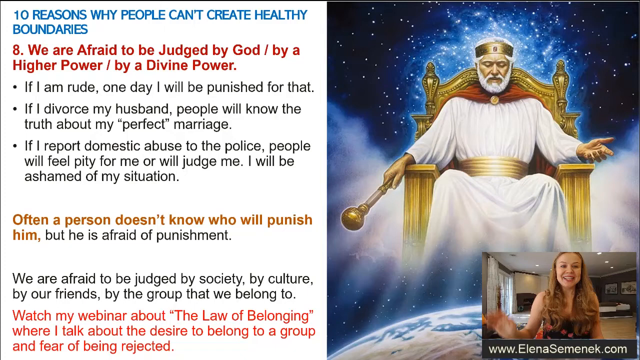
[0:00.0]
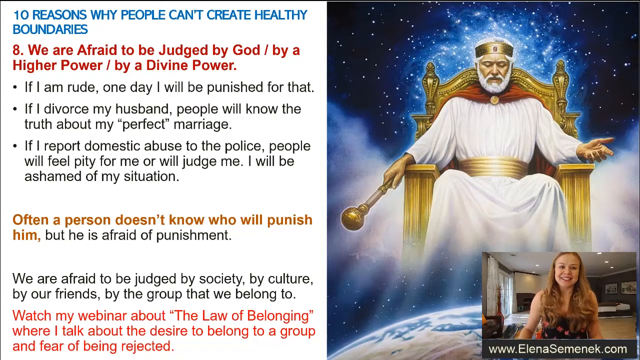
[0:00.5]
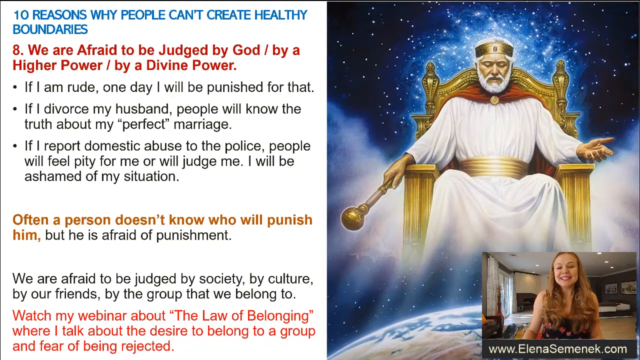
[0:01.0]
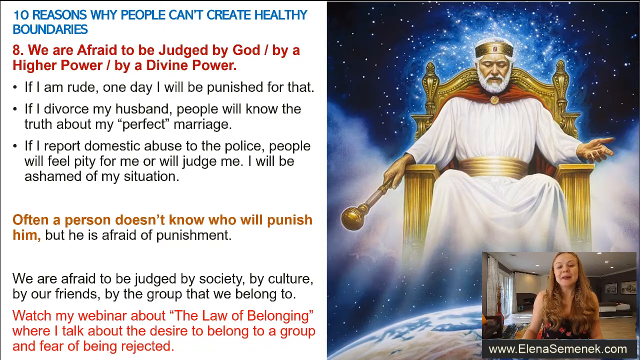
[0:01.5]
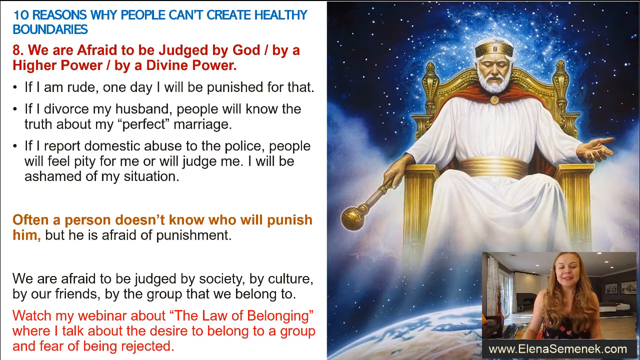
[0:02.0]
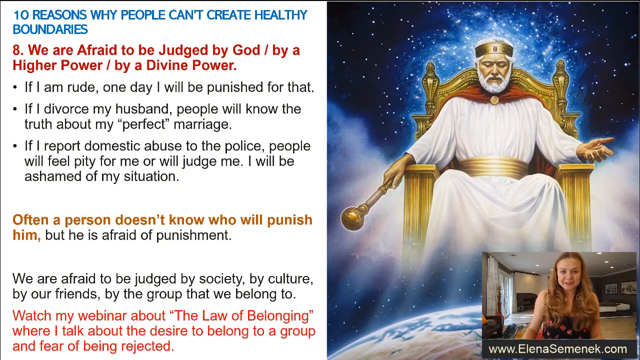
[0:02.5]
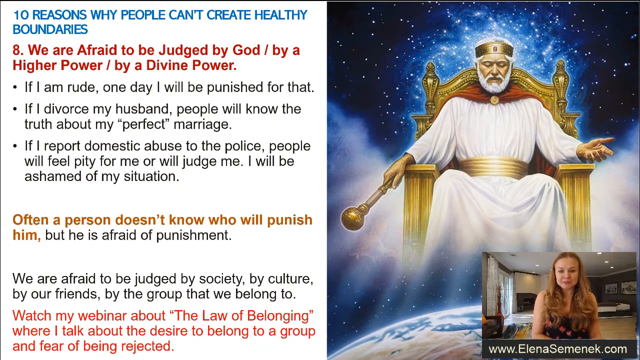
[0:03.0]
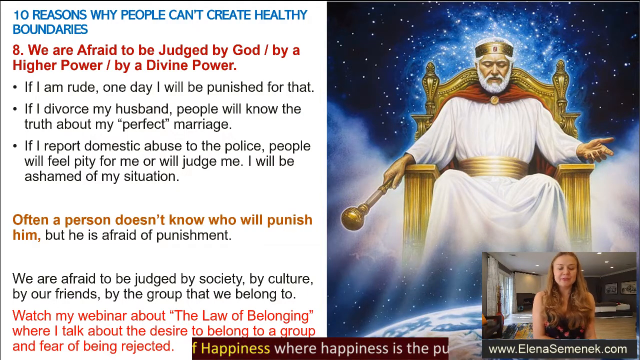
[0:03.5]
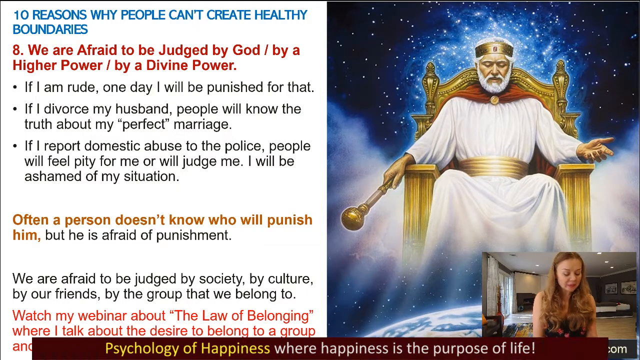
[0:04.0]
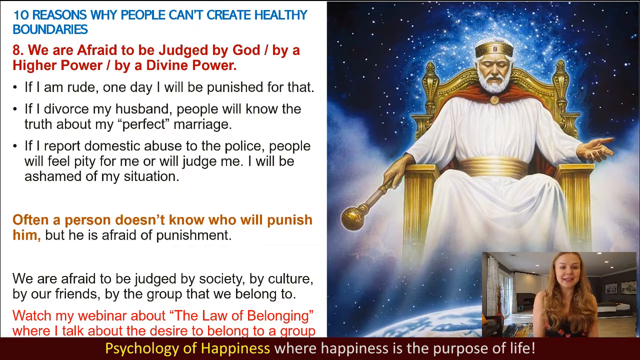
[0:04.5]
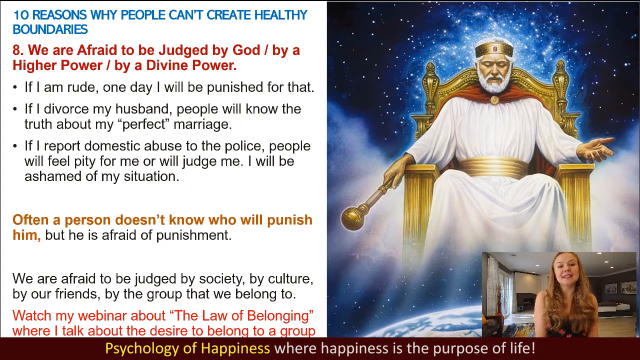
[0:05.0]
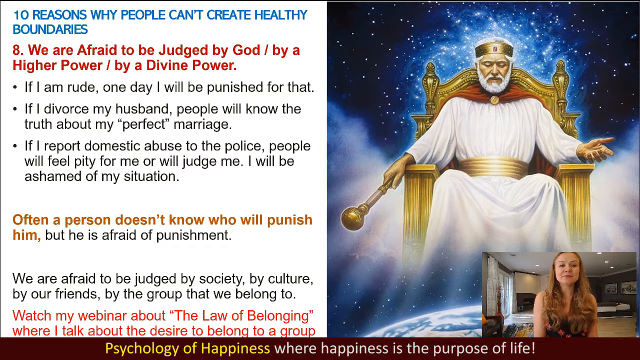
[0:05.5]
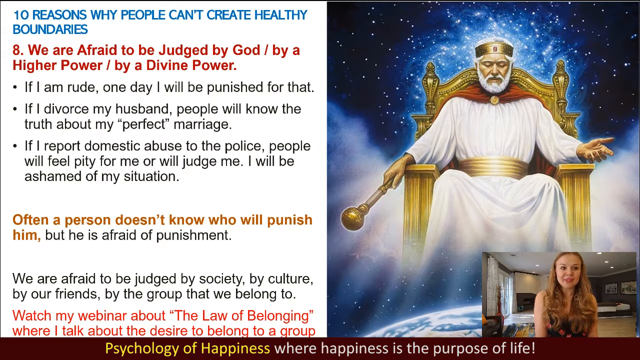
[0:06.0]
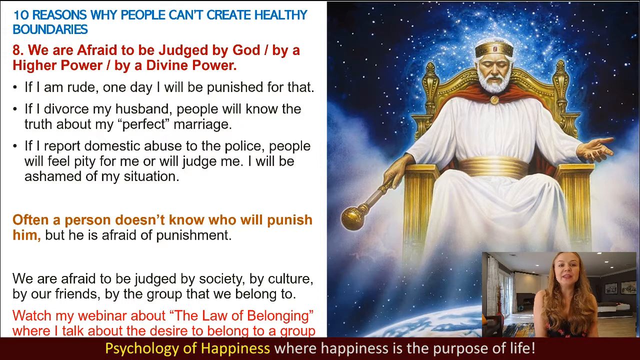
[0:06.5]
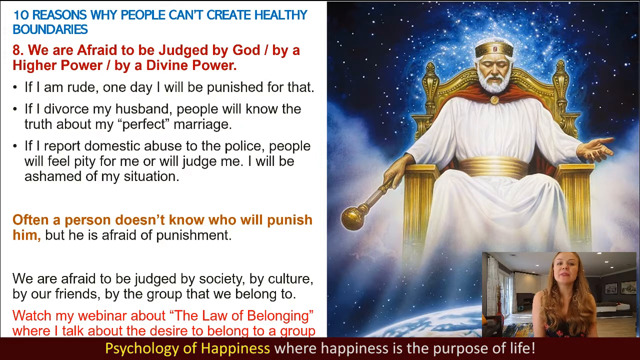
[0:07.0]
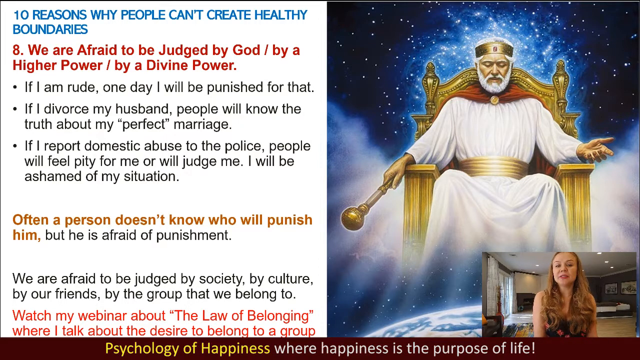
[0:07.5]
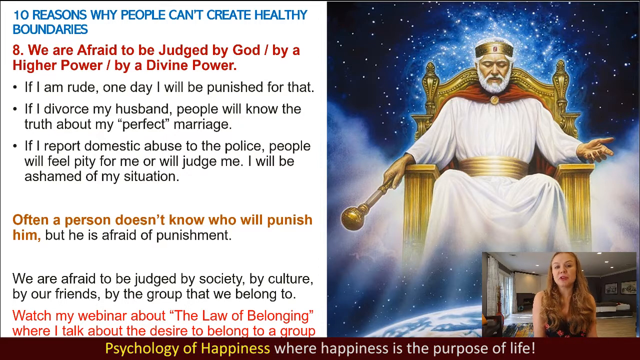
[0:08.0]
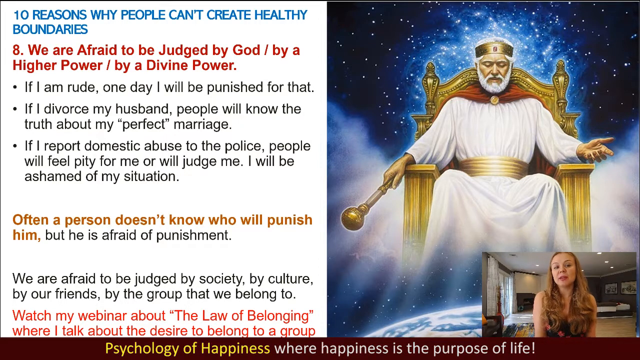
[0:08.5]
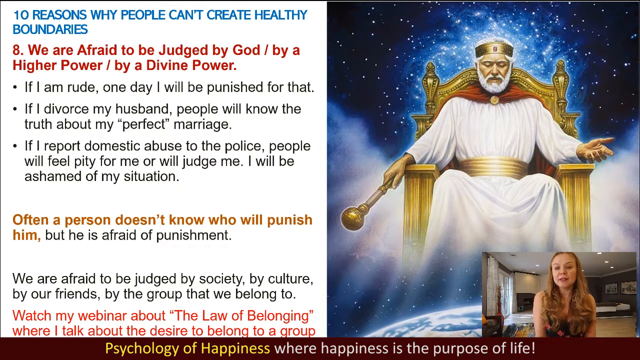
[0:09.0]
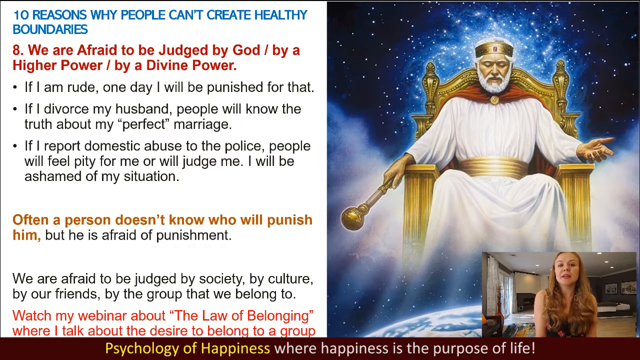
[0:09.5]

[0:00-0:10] The screen is split into two halves, left and right. In the bottom right-hand corner of the whole screen is another live video showing a woman with long blonde hair in a sleeveless black tank top that appears to have flowers on it. She is in a really big room, and along the bottom of that video it says "www.elenasemenek.com". She speaks while looking directly at the camera. Above her, on the right half of the screen, is a large picture of a golden throne. On the throne sits a man in a white robe with a gold belt, holding something like a gold sphere in his right hand and wearing a gold crown on his head. He has a white beard, white mustache and white hair. Behind him is space, with stars in the darkness. The left side of the screen is white, and starting at the top it reads: "10 reasons why people can't create healthy boundaries. 8. We are afraid to be judged by God, by a higher power, by a divine power. If I am rude, one day I will be punished for that. If I divorce my husband, people will know the truth about my perfect marriage. If I report domestic abuse to the police, people will feel pity for me or will judge me. I will be ashamed of my situation. 9. Often a person doesn't know who will punish him, but he is afraid of punishment." Below that it reads "We are afraid to be judged by society, by culture, by our friends, by the group that we belong to. 10. We are afraid of being rejected." While the woman talks, a small brown stripe appears along the very bottom of the screen, reading "psychology of happiness, where happiness is the purpose of life".